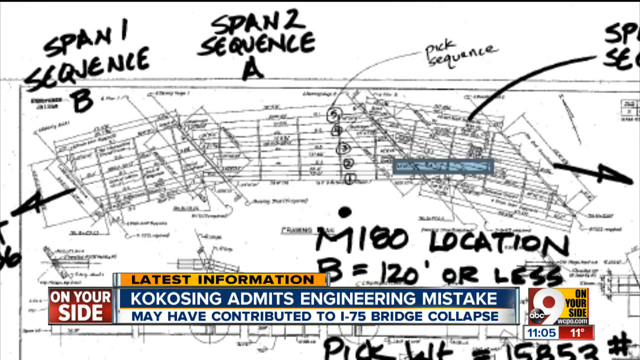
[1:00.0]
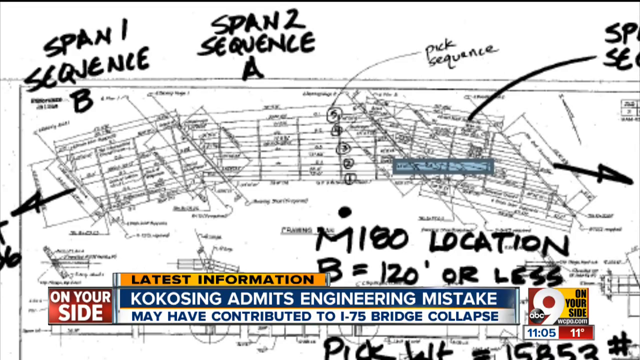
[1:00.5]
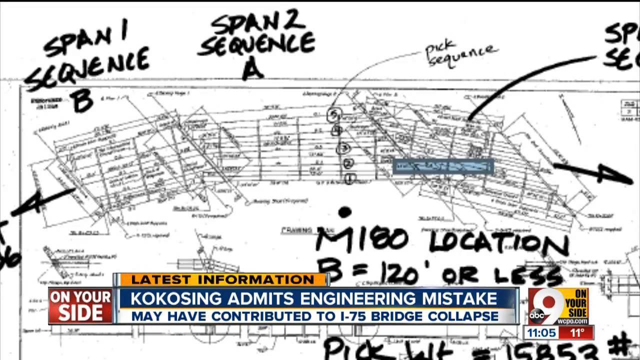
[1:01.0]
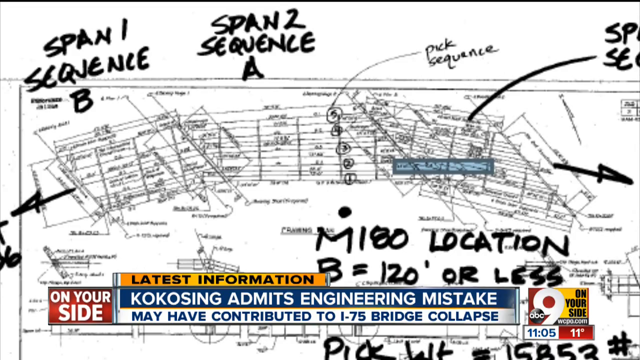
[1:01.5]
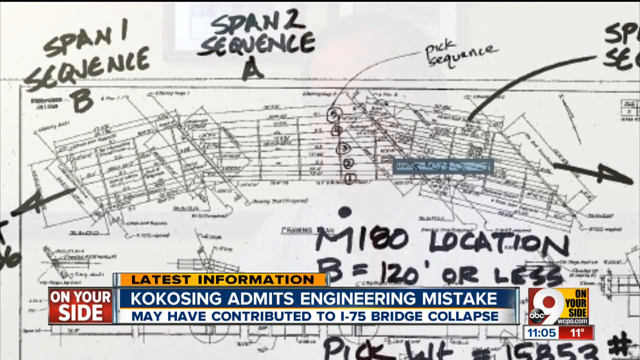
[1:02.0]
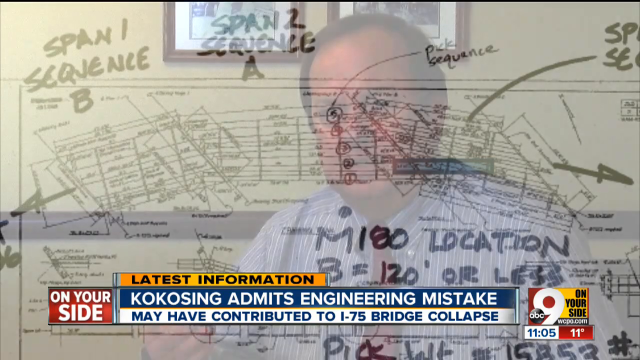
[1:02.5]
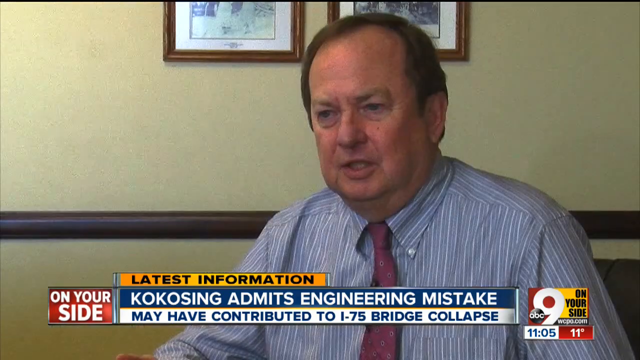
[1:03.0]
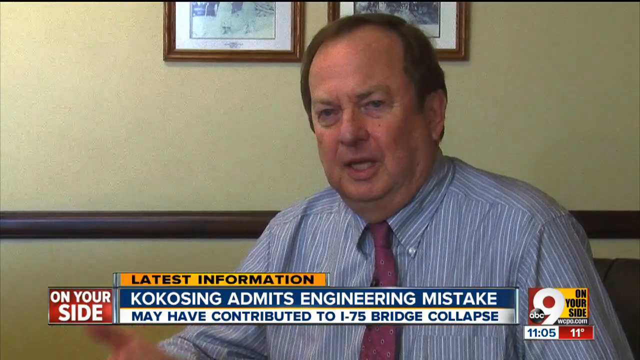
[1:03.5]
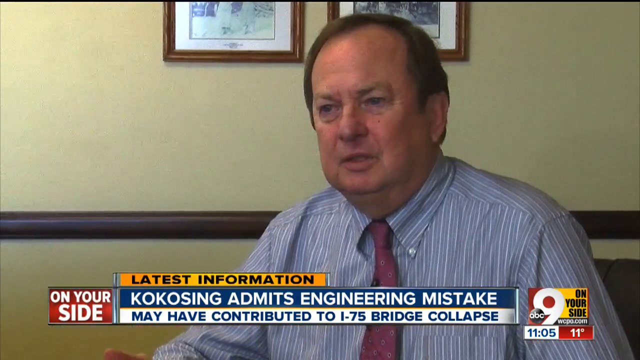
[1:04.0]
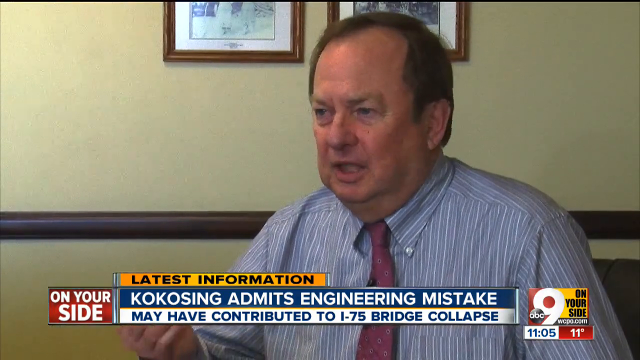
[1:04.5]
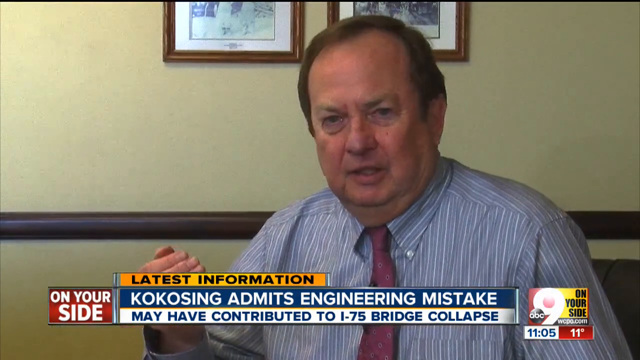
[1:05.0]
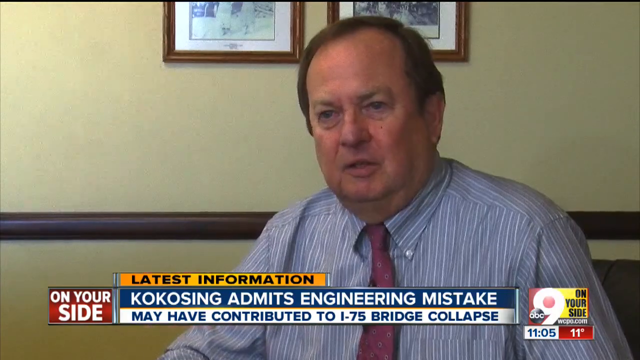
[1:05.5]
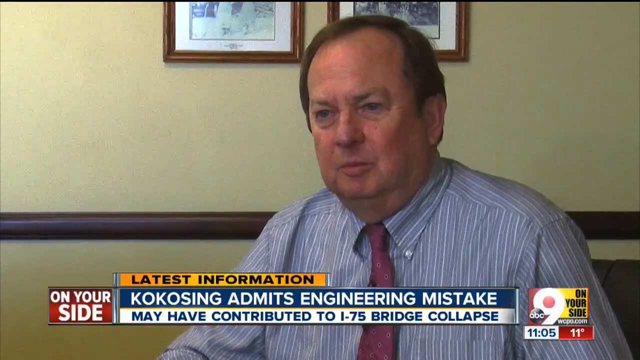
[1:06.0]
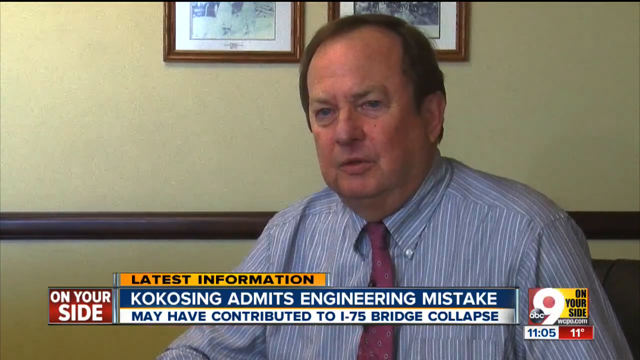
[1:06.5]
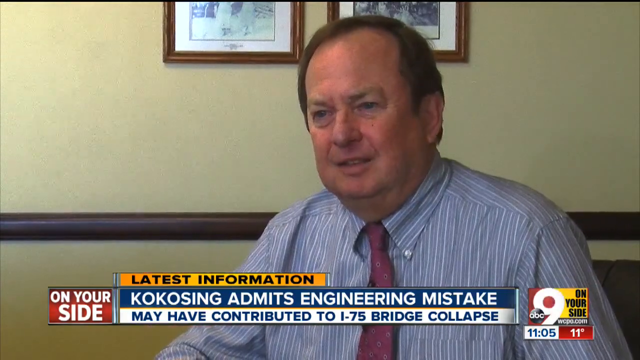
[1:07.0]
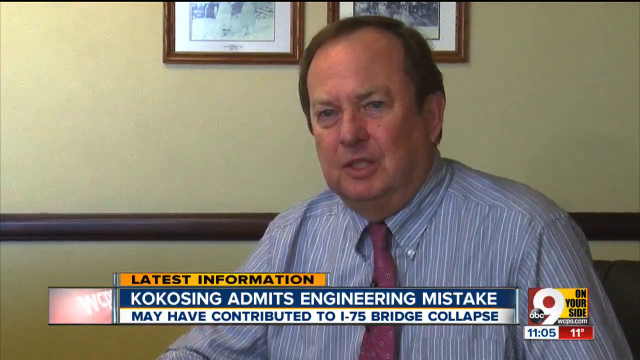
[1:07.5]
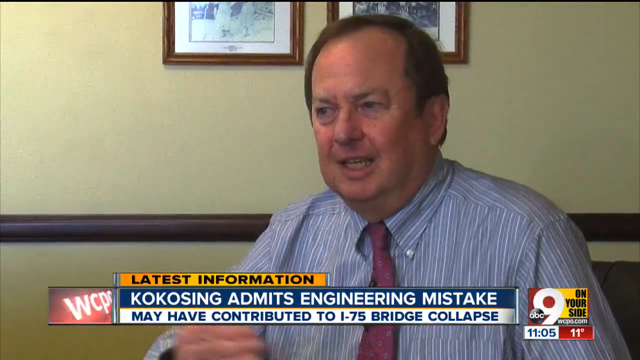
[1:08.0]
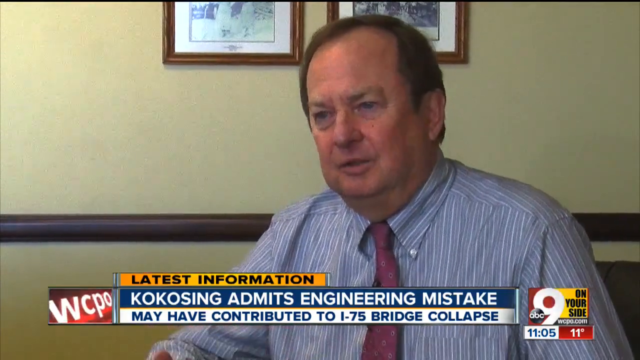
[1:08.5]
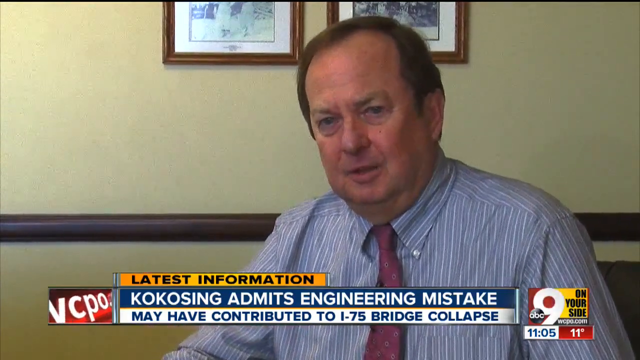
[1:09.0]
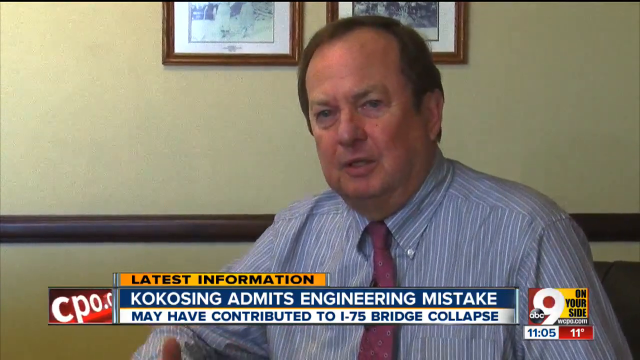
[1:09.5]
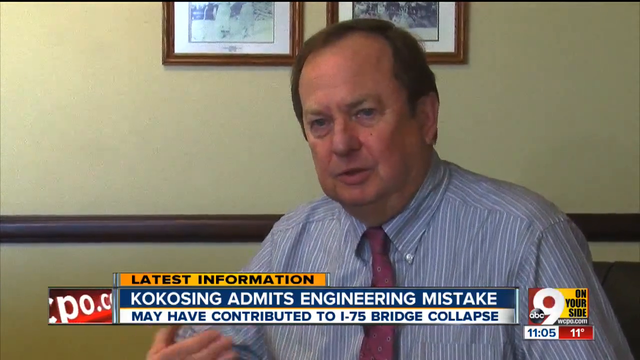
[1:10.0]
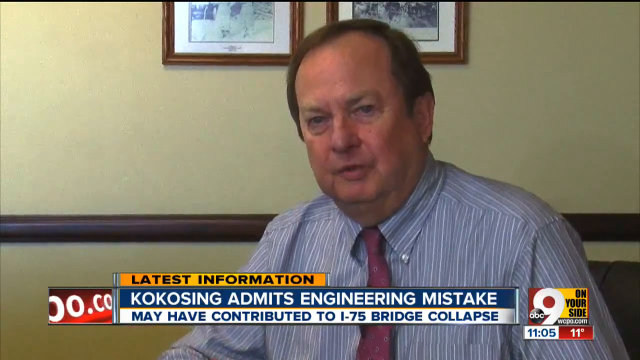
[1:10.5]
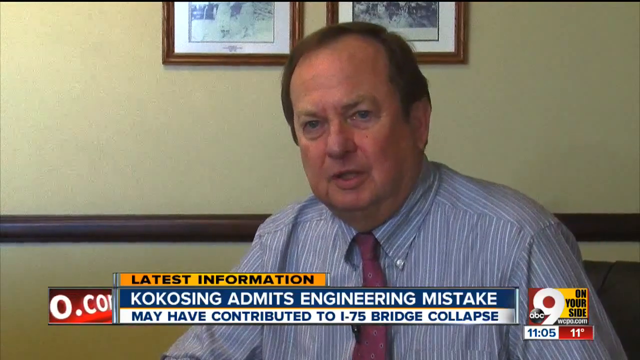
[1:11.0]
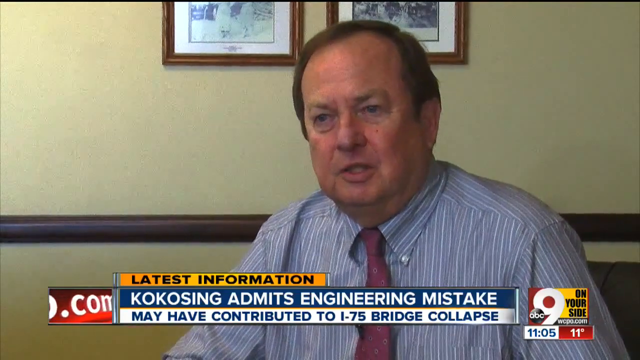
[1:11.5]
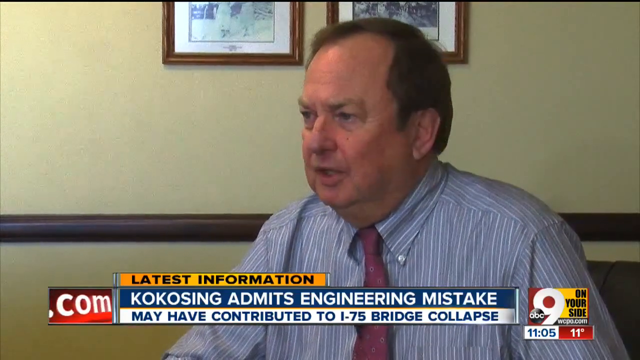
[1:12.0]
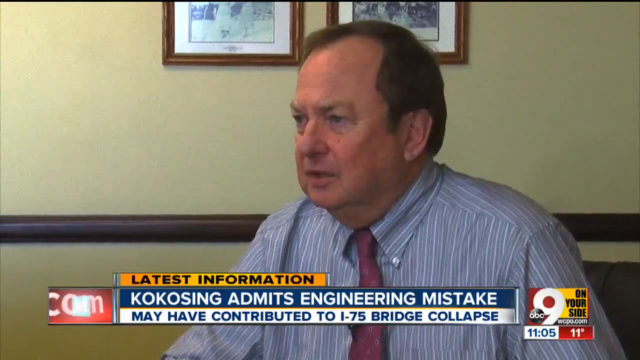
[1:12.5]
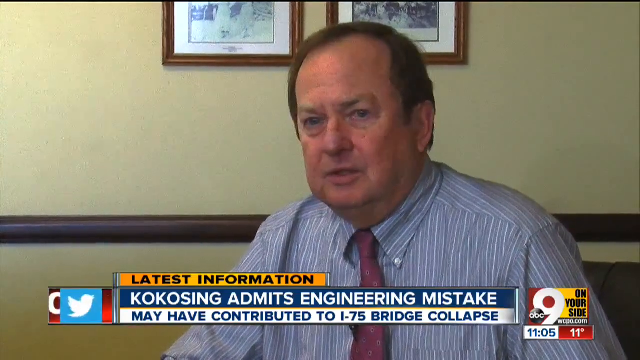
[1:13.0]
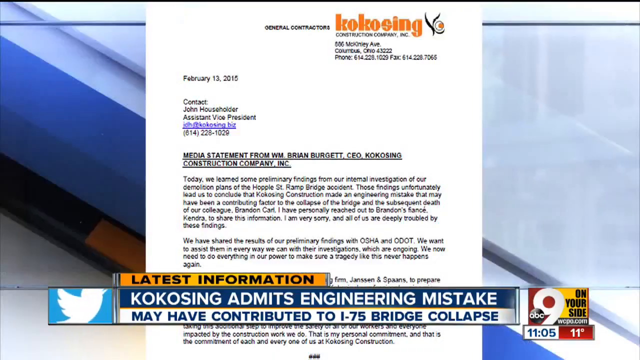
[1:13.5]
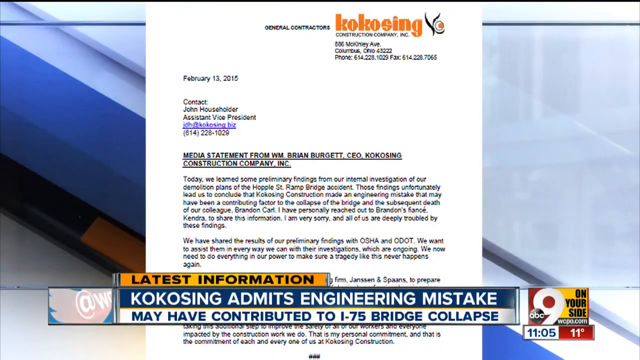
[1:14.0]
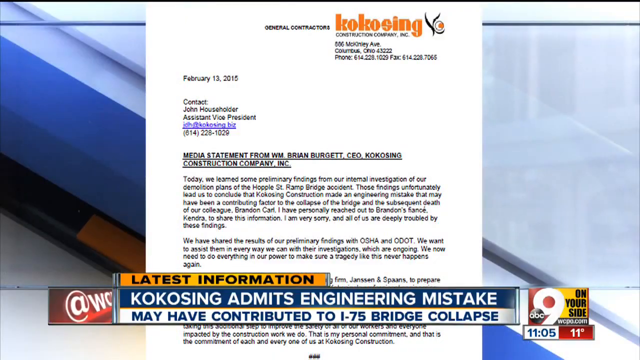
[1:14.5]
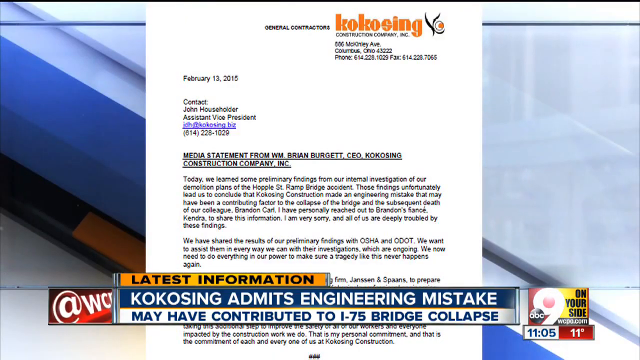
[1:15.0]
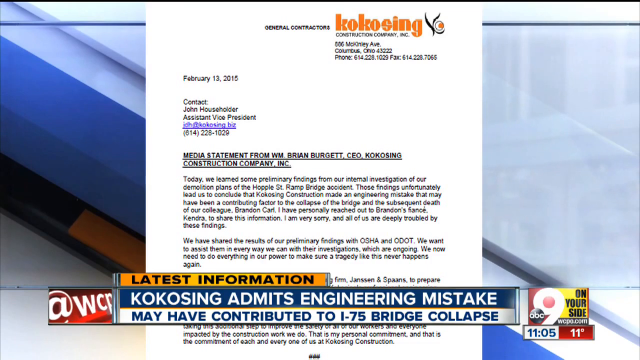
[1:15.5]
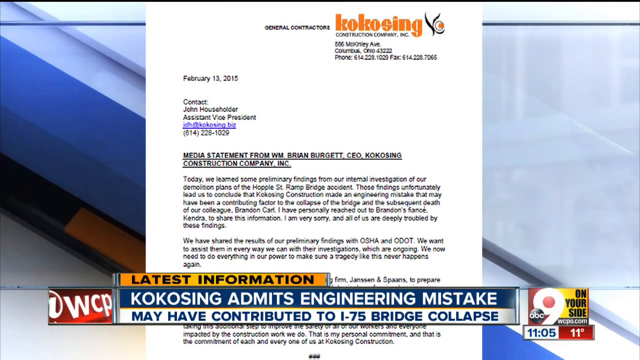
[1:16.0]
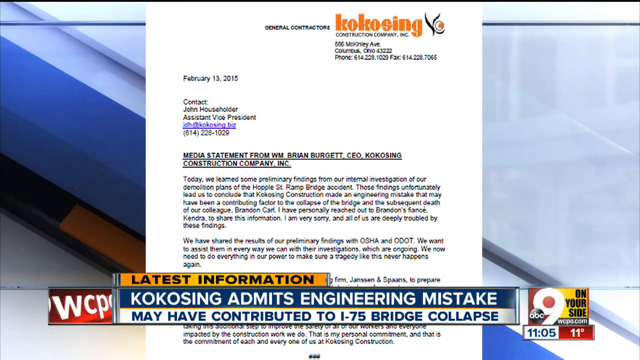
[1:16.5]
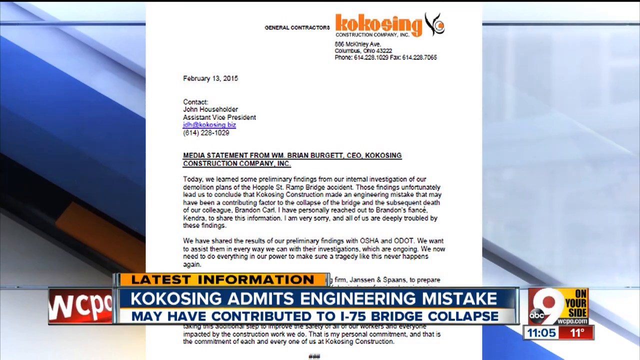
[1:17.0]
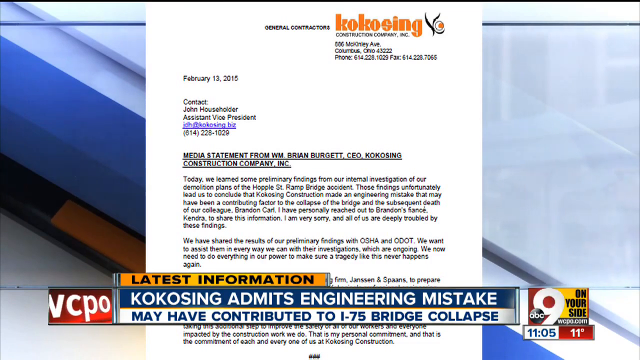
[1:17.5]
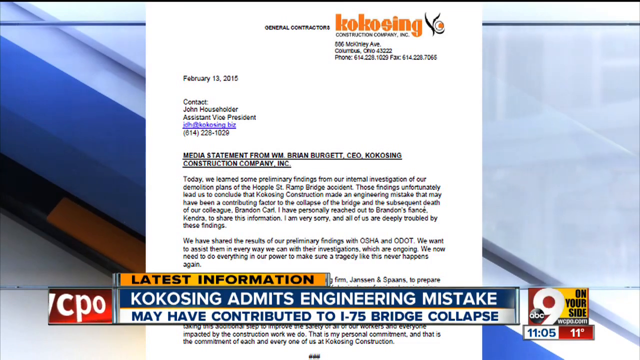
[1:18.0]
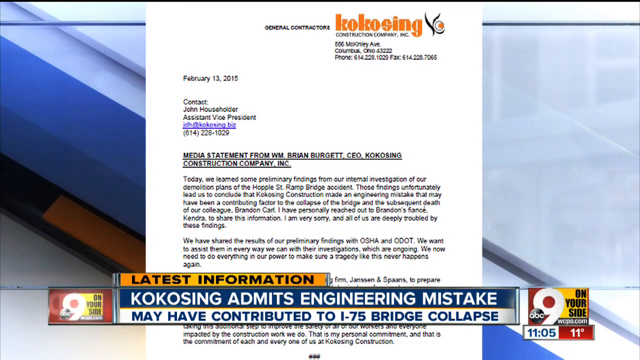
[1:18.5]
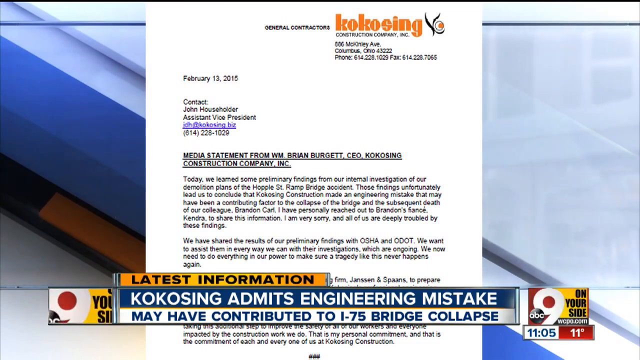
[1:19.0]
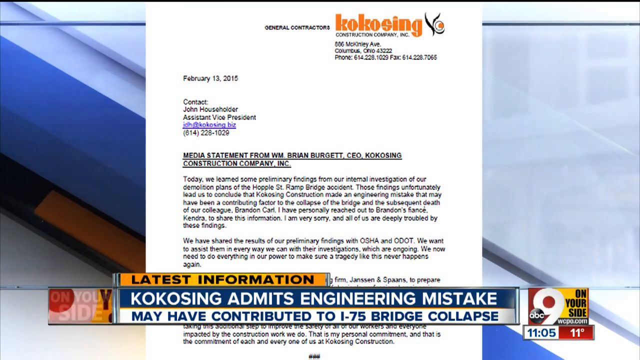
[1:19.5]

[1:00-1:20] The report covers how the bridge was constructed, its precise location, and its span and sequence; apparently the bridge was not structurally sound. An open letter to the media is shown, but its text is too small to read. The company seems to be accepting full responsibility for the accident.